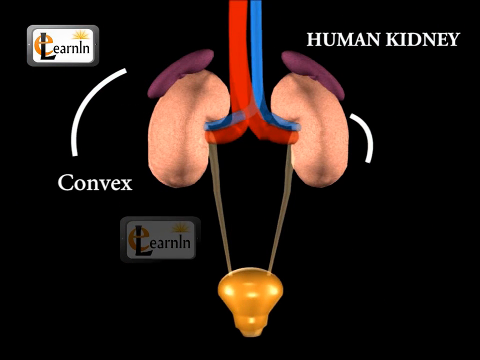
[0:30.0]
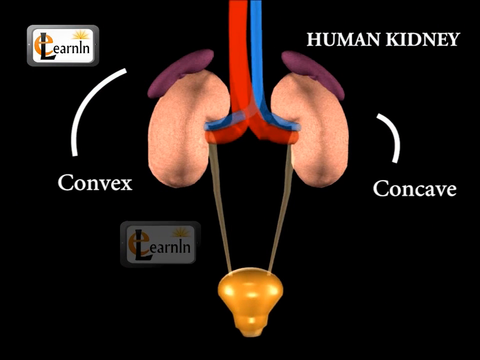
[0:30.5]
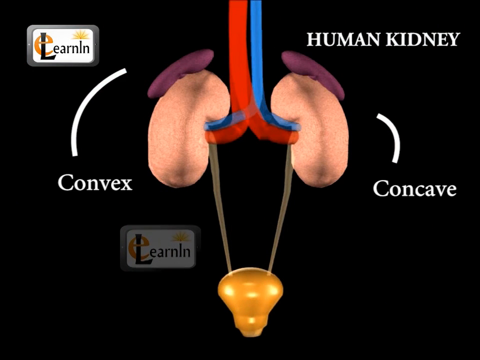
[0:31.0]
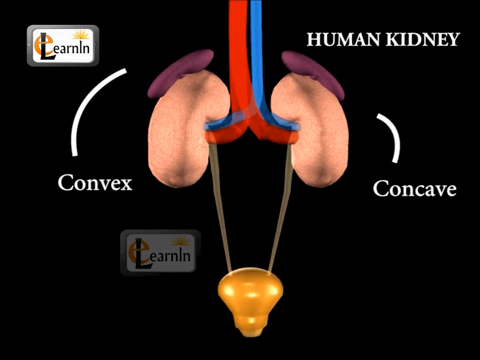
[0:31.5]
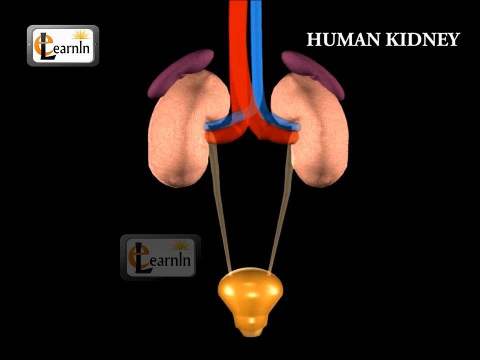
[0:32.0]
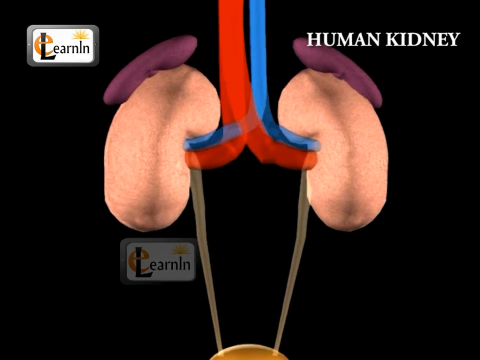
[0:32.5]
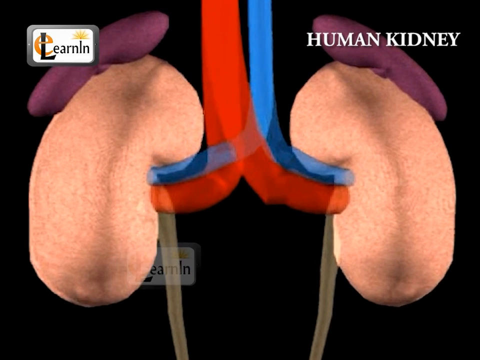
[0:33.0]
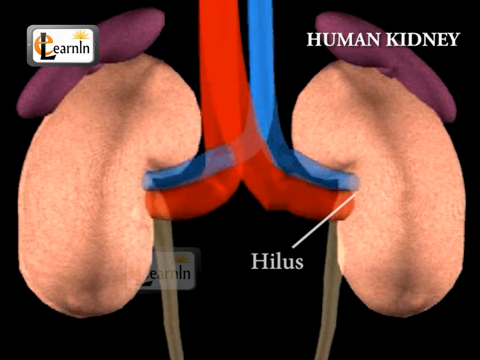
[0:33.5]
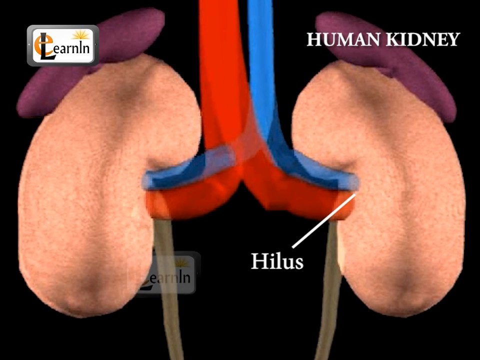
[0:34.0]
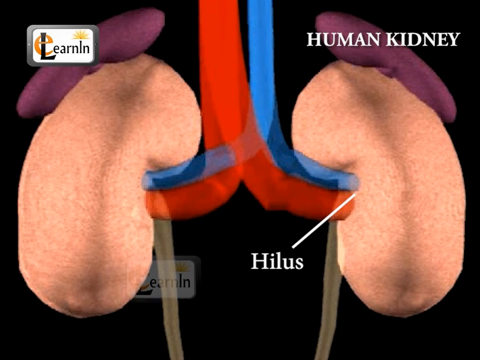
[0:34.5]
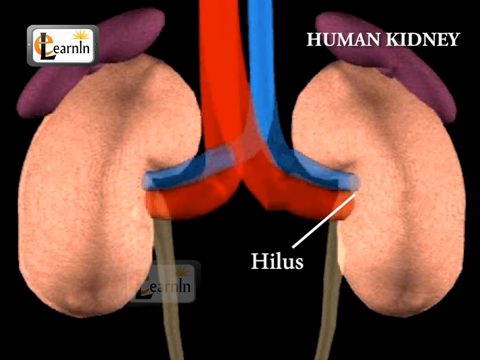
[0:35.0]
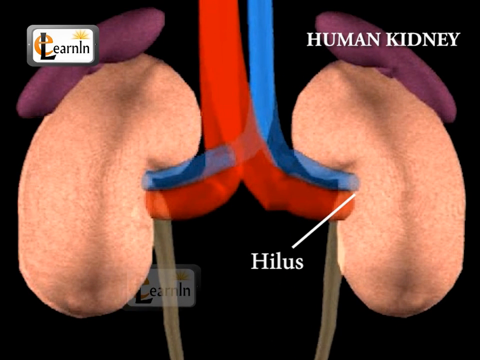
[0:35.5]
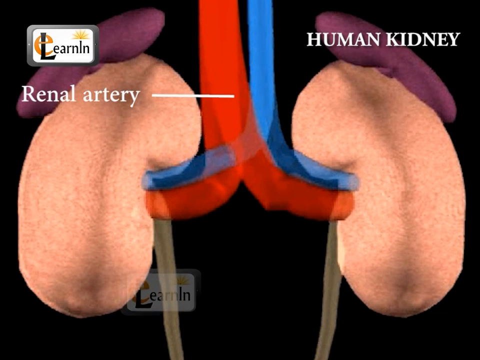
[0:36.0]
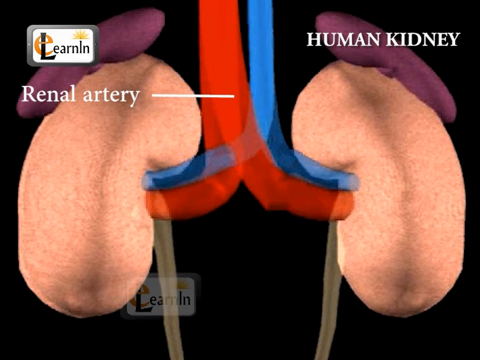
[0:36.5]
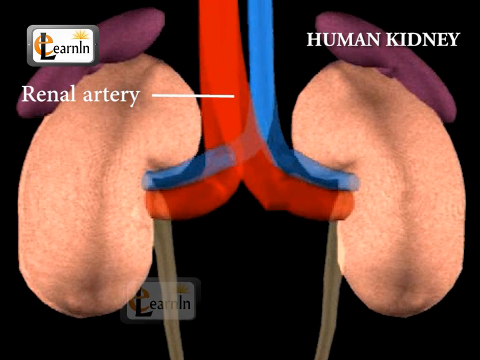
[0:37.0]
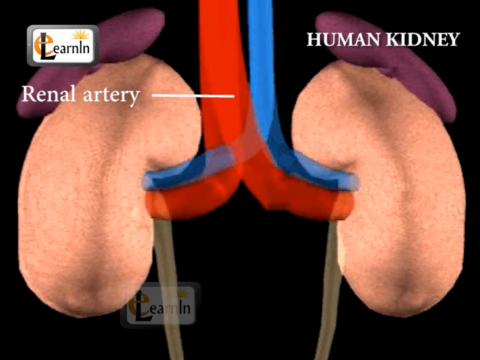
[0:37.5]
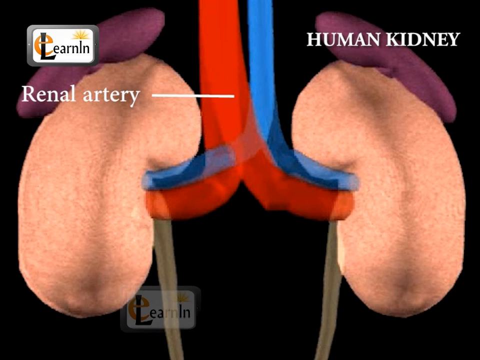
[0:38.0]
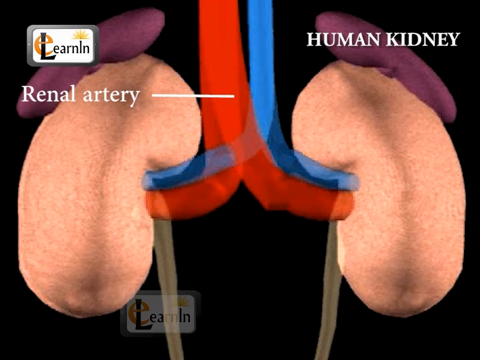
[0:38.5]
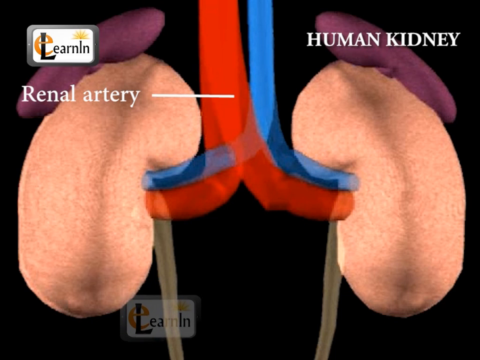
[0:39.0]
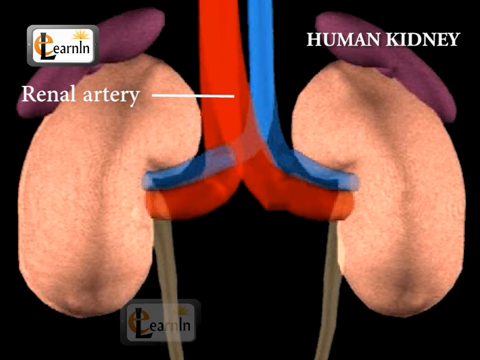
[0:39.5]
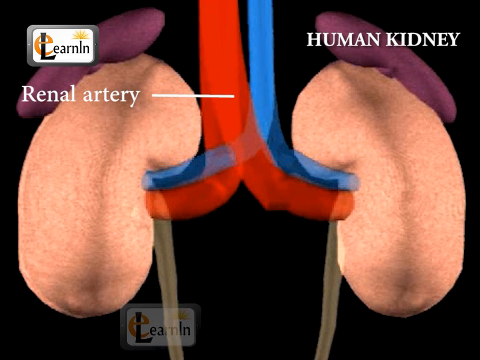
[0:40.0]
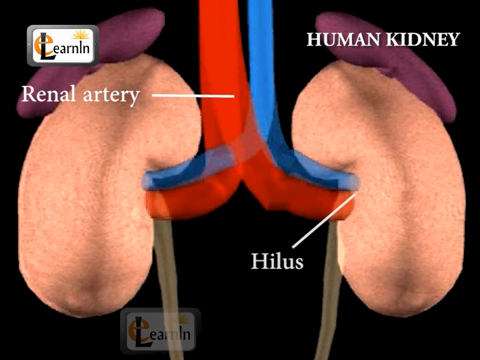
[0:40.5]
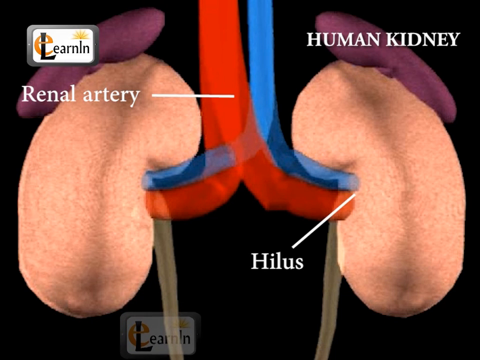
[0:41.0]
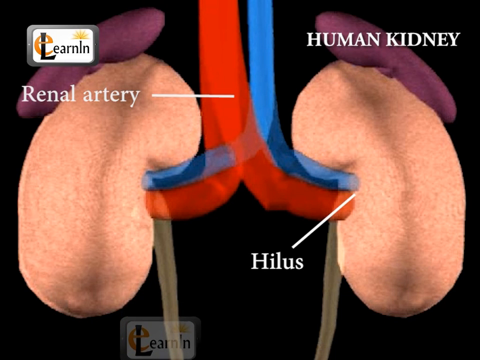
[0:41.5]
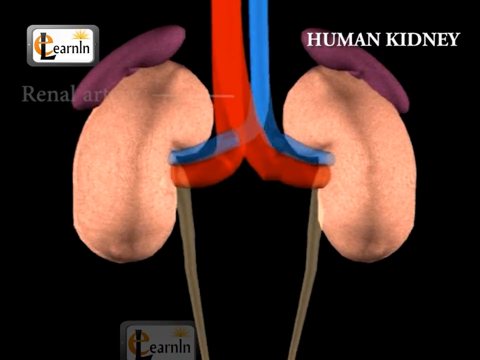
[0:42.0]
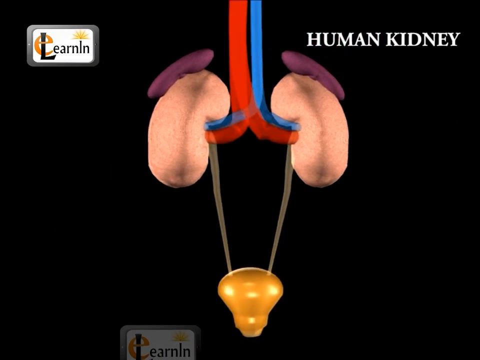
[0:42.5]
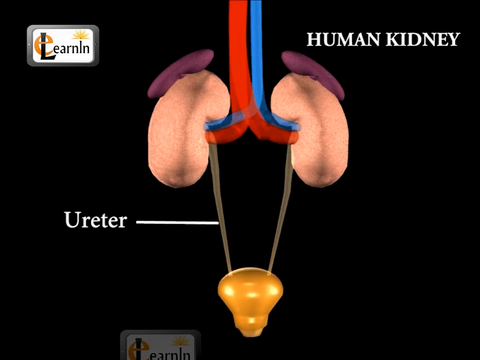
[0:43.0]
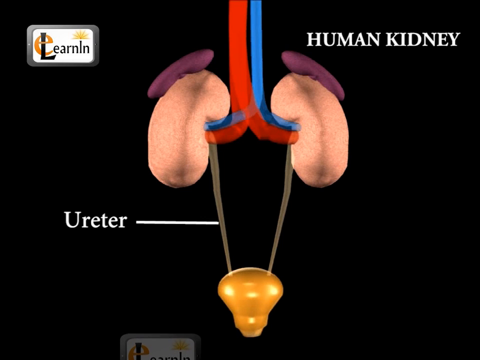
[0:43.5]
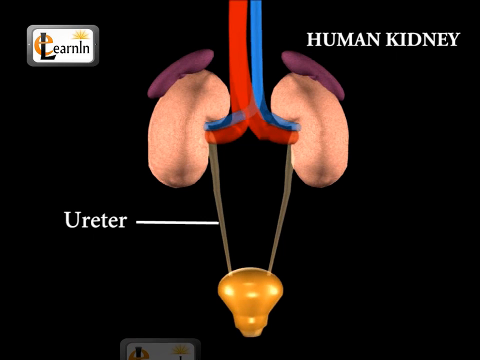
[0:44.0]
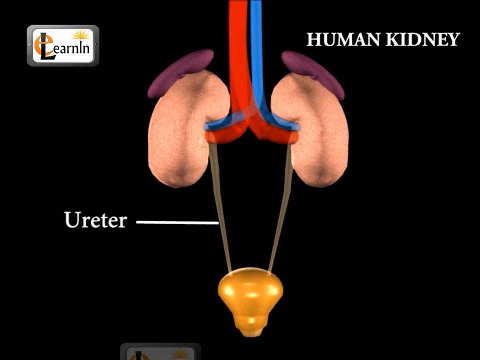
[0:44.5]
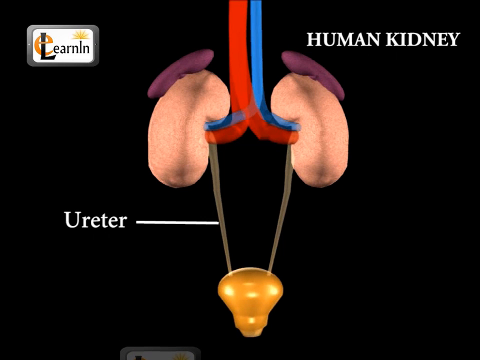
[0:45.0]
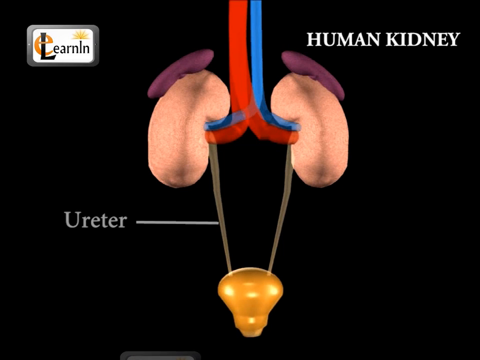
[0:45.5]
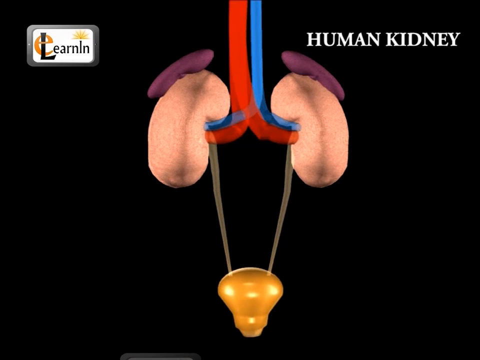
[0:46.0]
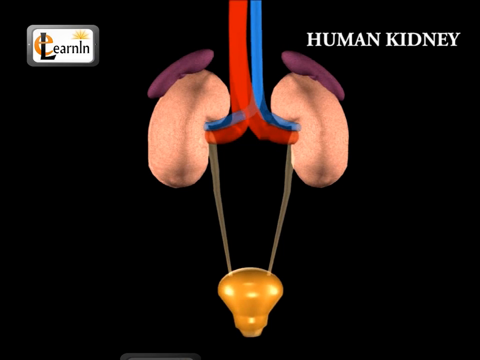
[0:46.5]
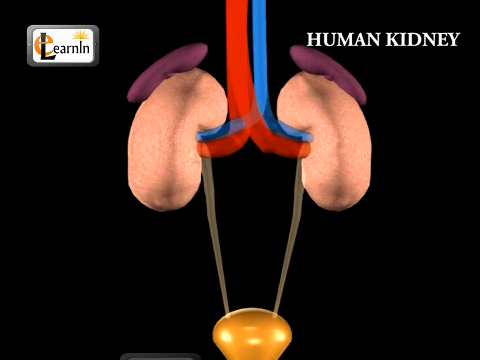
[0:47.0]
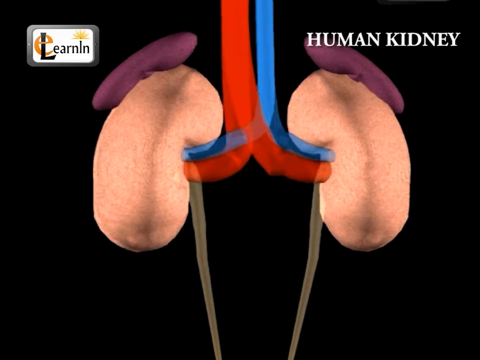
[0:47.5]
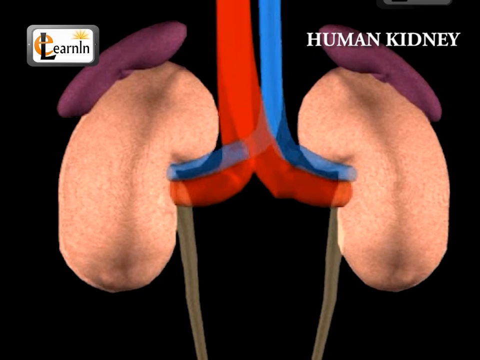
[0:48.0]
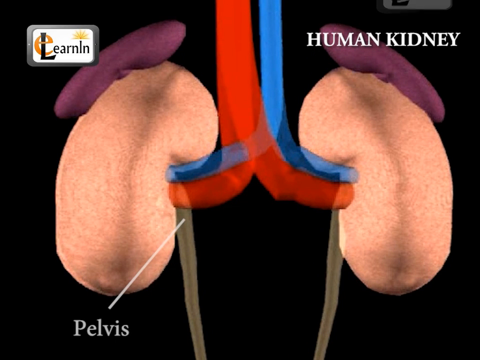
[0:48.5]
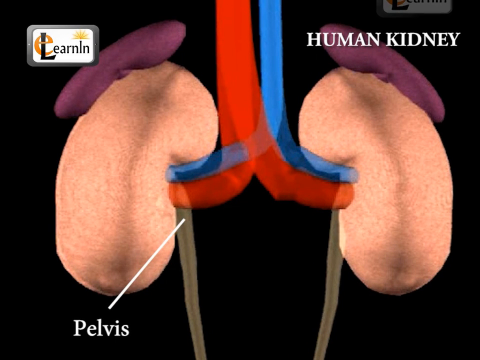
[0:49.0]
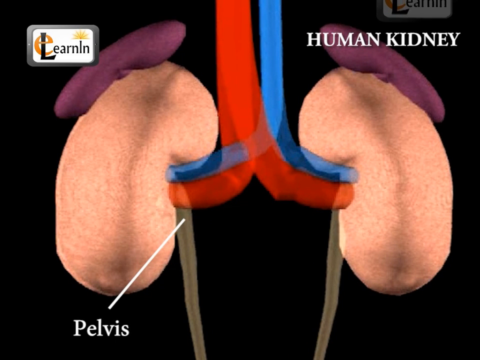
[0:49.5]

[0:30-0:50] A 3D model of two kidneys and some anatomical structures connected to each other is in the center of the frame against a black background. Words are positioned on the left and right sides of the image, connected to structures of the kidneys of the human renal system by rather thick white curved segments. The camera zooms in closer to the two kidneys, and more white writing appears, connected by white segments to structures linked to the kidneys. The camera then zooms back out, showing the three-dimensional model of the kidneys on the black background, and another white word appears, connected to another structure by another white segment. The animations are quite fluid, with white guidelines supporting the 3D model and the illustrations.